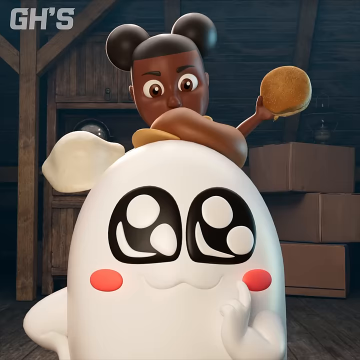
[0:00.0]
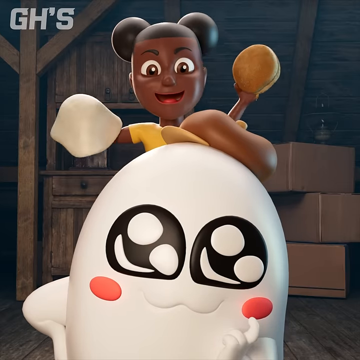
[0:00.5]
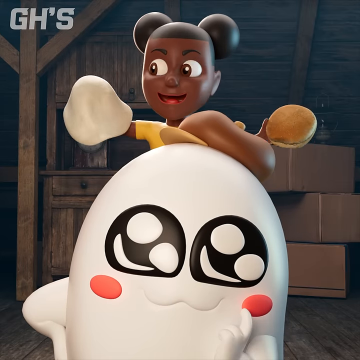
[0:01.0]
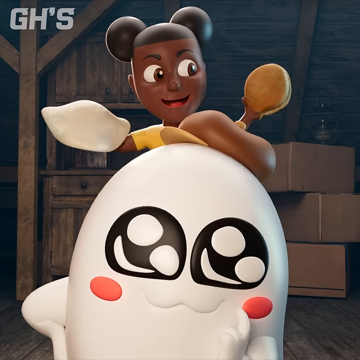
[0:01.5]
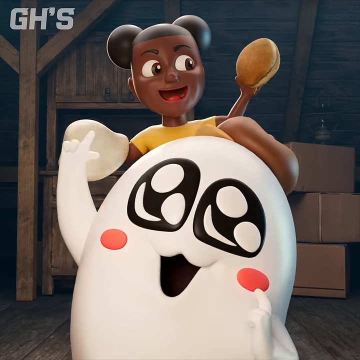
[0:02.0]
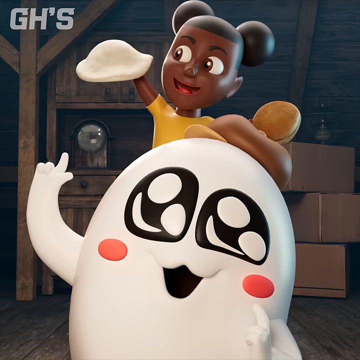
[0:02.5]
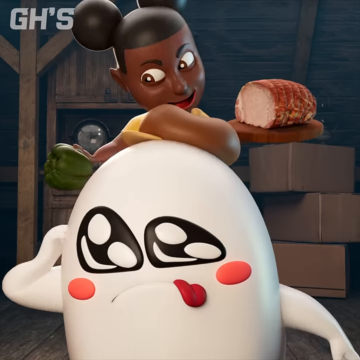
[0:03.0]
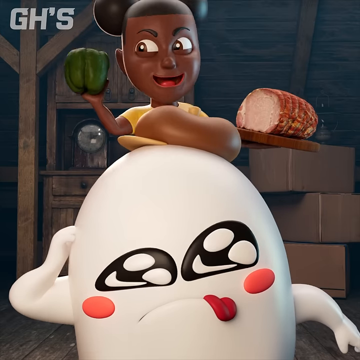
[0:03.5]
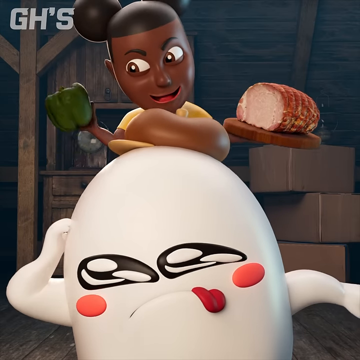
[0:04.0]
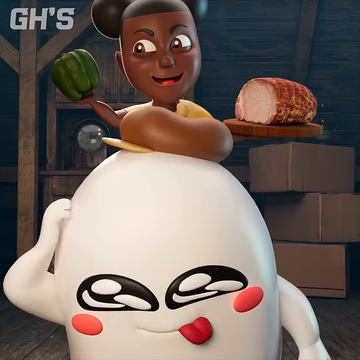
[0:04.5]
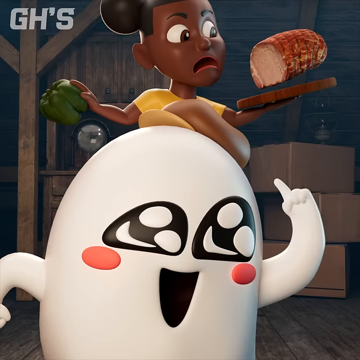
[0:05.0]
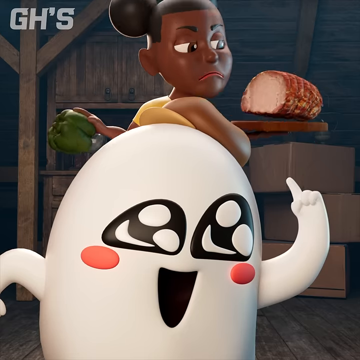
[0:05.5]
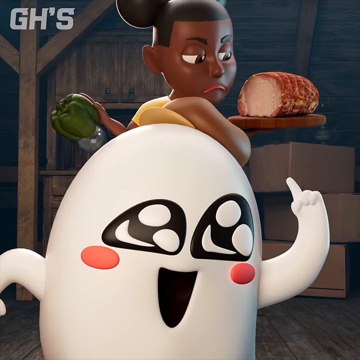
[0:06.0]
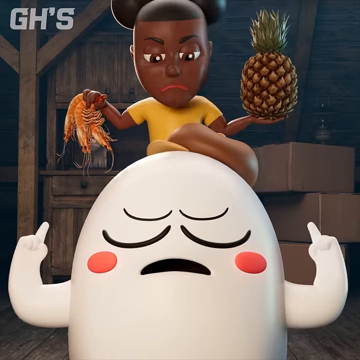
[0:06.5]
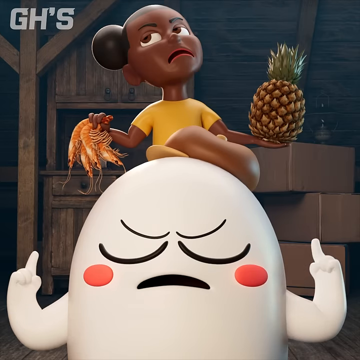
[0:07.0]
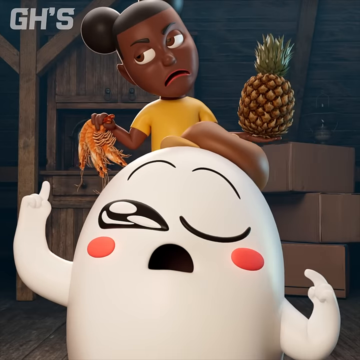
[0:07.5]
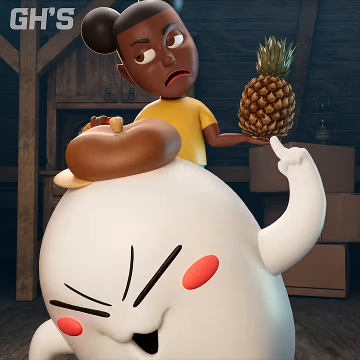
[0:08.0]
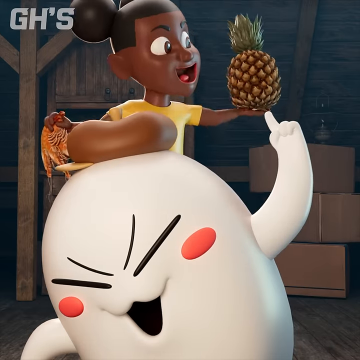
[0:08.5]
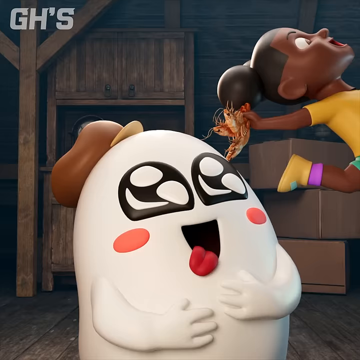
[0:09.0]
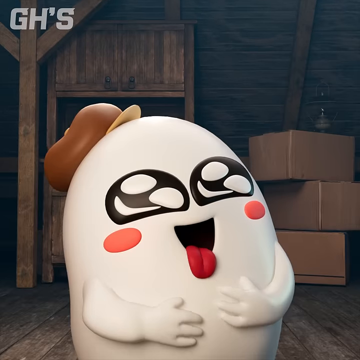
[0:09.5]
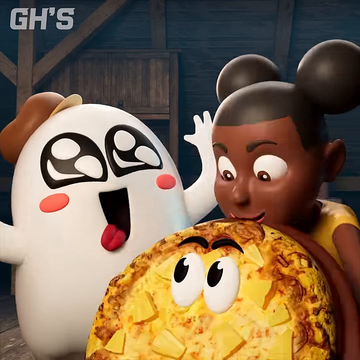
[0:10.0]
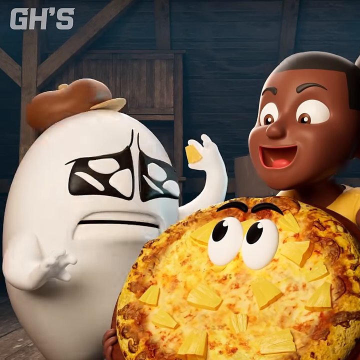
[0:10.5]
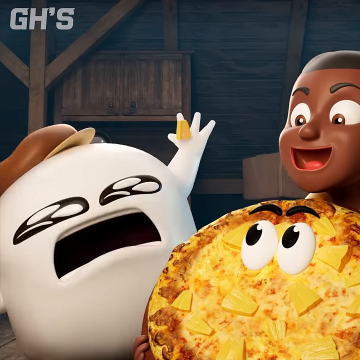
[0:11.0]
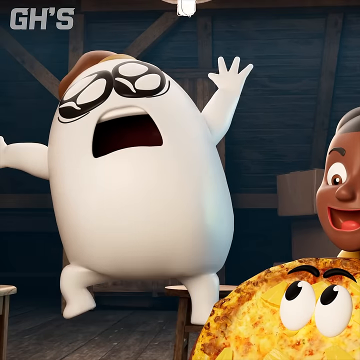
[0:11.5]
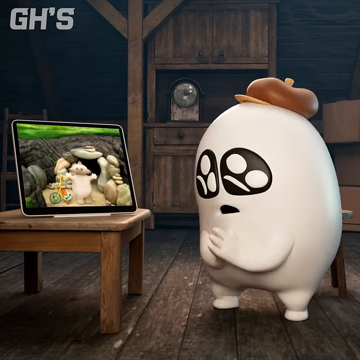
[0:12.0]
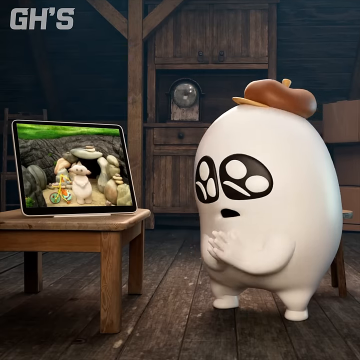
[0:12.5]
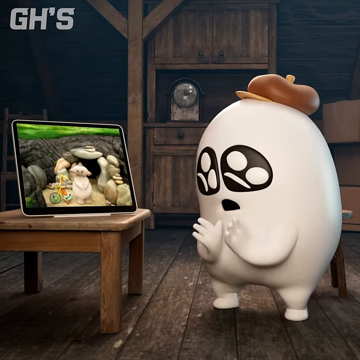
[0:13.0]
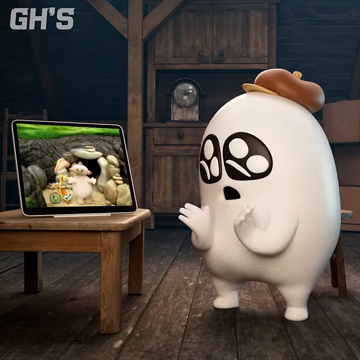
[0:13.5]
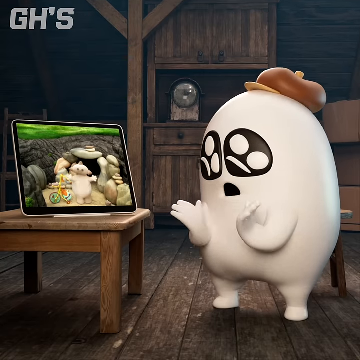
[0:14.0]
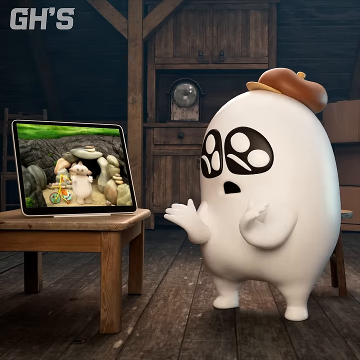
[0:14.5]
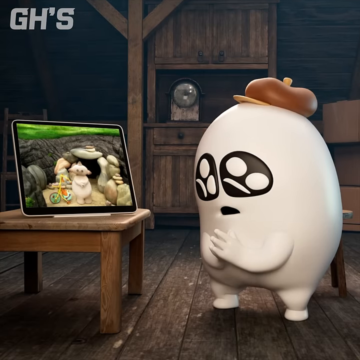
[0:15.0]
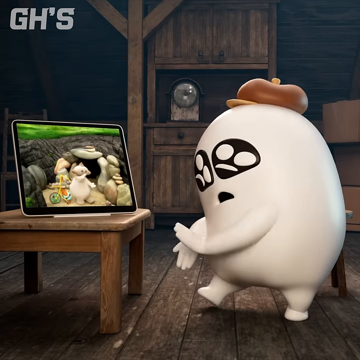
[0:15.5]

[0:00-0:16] The video is called Maka Paka Amanda the adventure animation, GH animation. A black girl with space buns is in the back, and there seems to be a cute ghost. The two play a guessing game about what the girl is holding. She holds a piece of dough and a bread or burger, and the ghost guesses the dough. Next she holds a green pepper and a big piece of ham, and the ghost wants the ham. Then the girl has pineapple and shrimp or prawn; the ghost gets the pineapple, and they make Hawaiian pizza. The ghost, who wears what appears to be a painter's hat, apparently doesn't like Hawaiian pizza: he picks the piece of pineapple out of the pizza and screams. He gets scared and jumps up, then watches a video of a clapping cat on his iPad, seemingly to cope with the presence of the Hawaiian pizza.